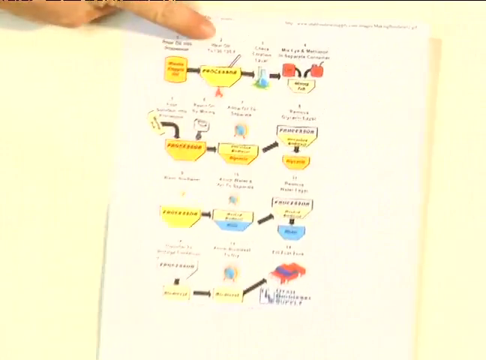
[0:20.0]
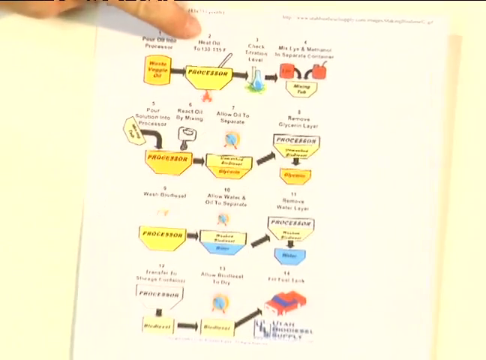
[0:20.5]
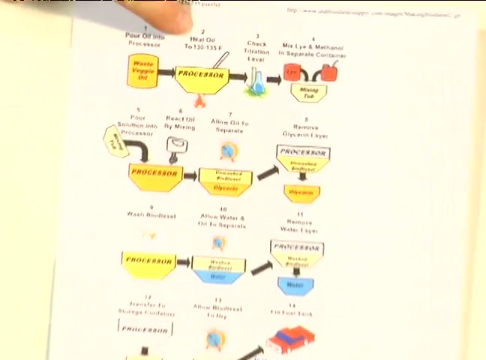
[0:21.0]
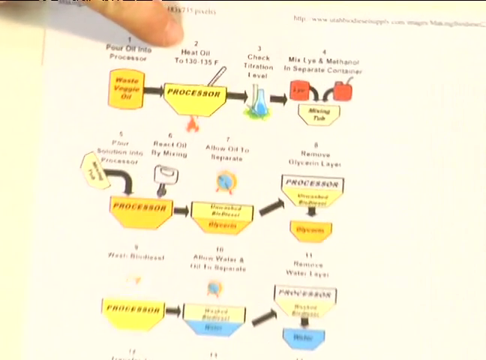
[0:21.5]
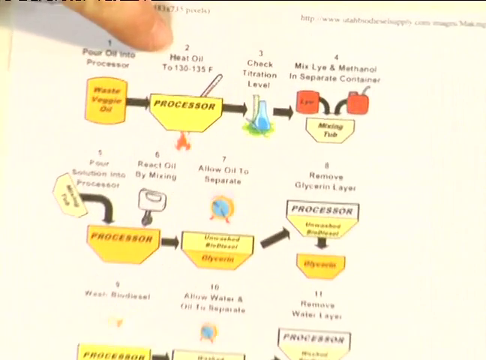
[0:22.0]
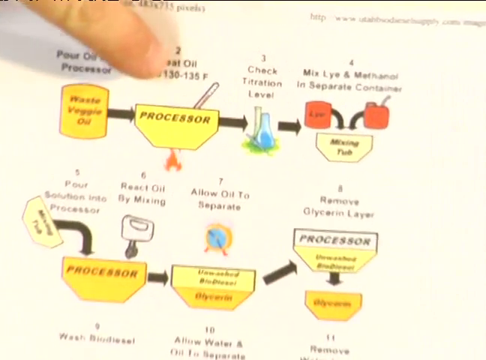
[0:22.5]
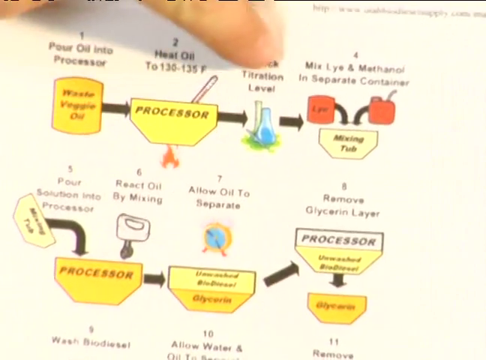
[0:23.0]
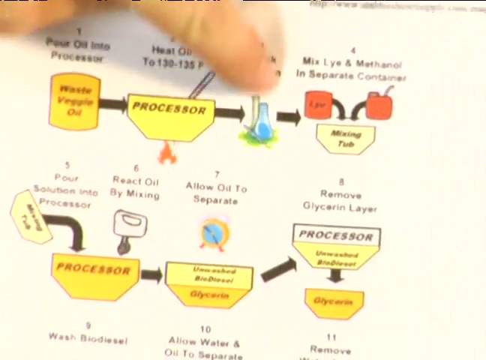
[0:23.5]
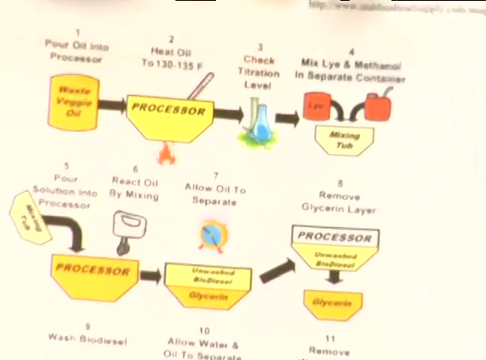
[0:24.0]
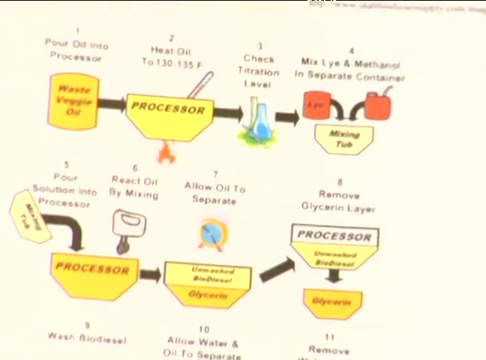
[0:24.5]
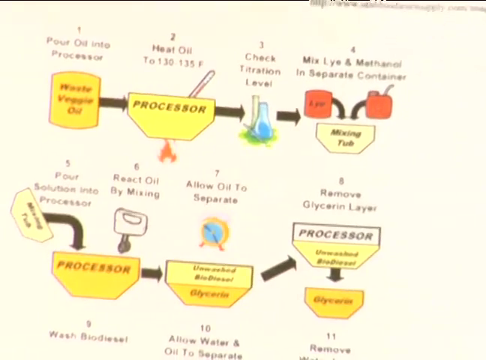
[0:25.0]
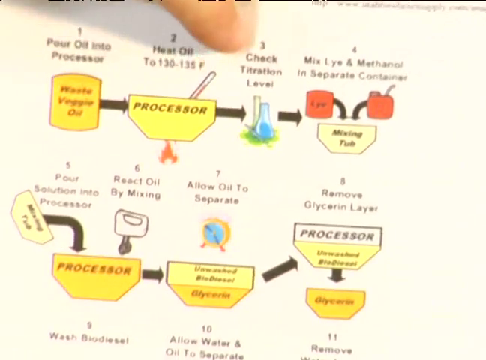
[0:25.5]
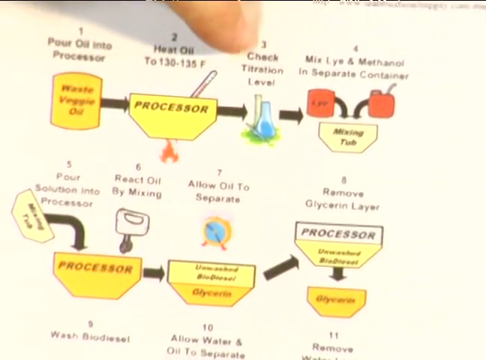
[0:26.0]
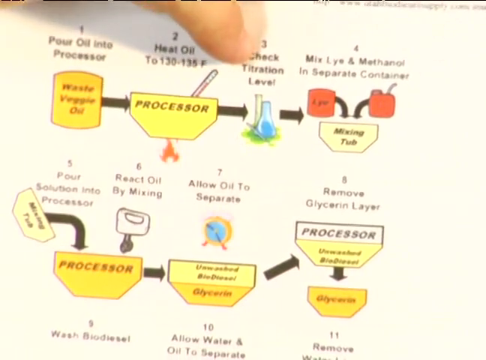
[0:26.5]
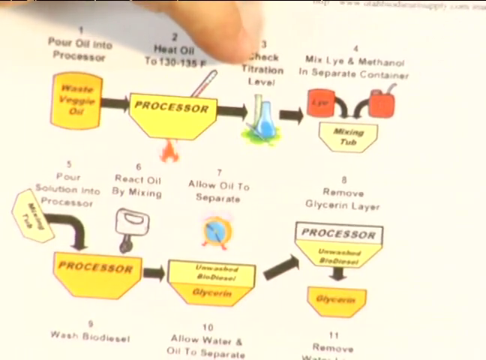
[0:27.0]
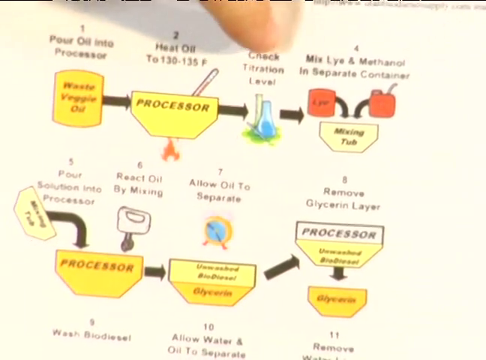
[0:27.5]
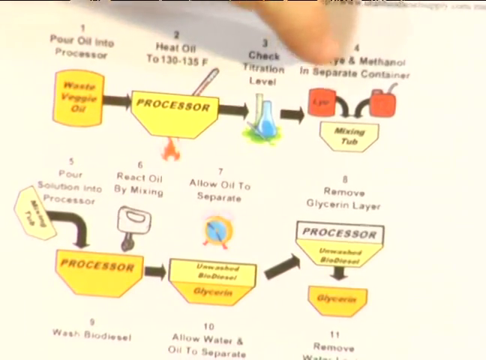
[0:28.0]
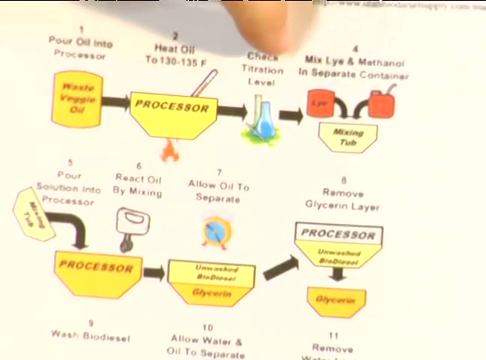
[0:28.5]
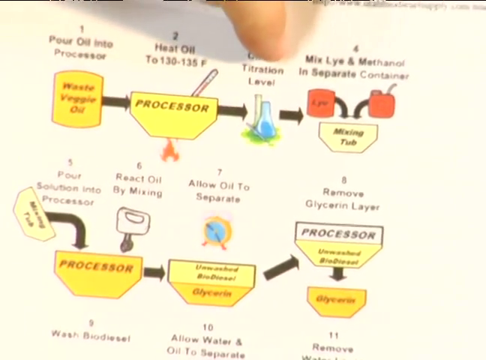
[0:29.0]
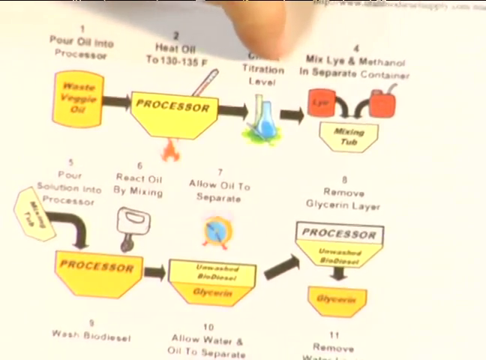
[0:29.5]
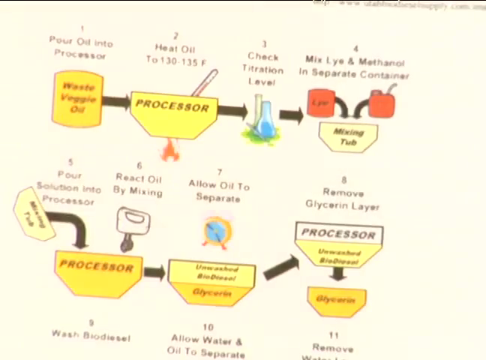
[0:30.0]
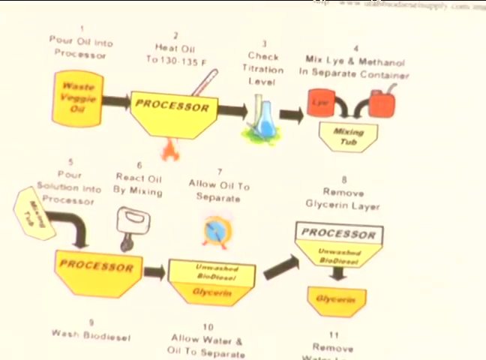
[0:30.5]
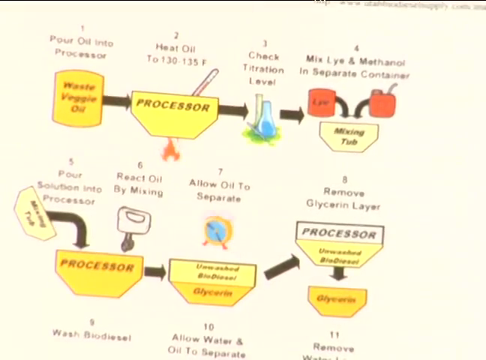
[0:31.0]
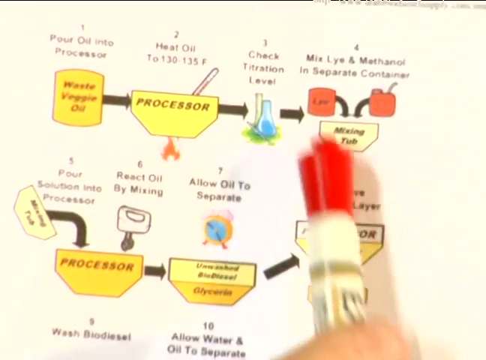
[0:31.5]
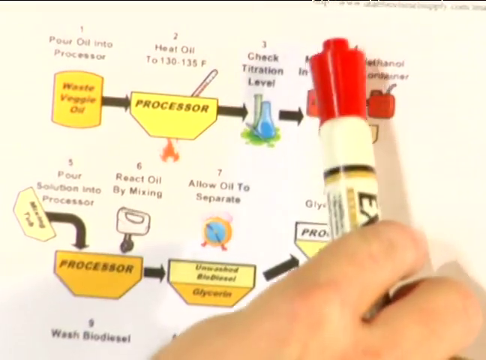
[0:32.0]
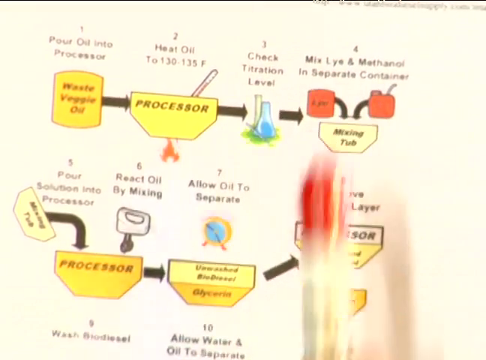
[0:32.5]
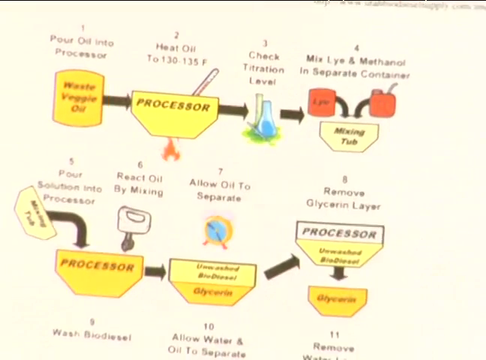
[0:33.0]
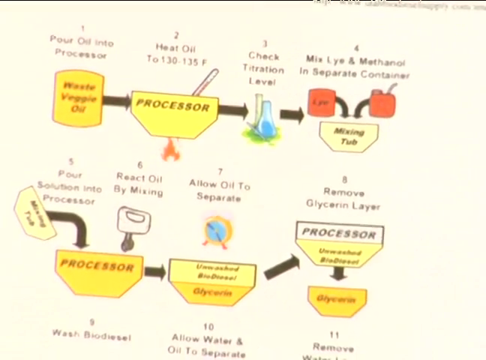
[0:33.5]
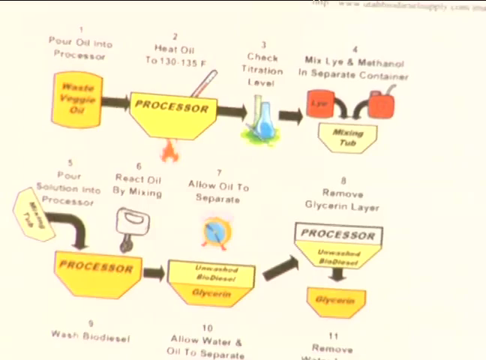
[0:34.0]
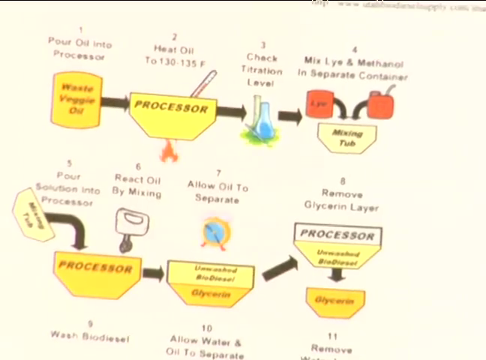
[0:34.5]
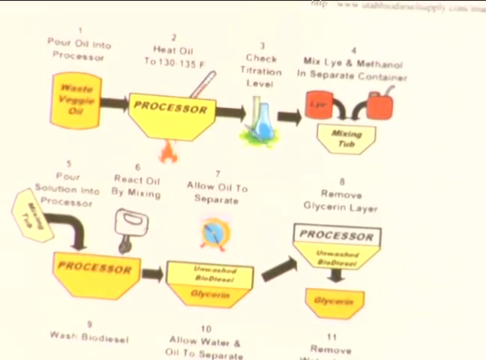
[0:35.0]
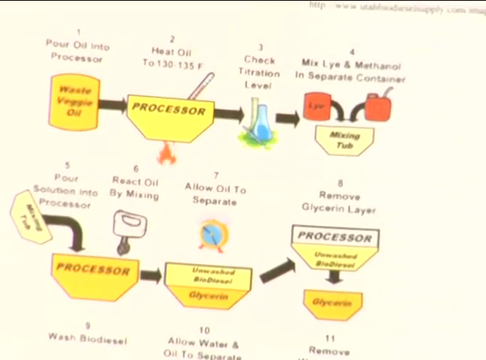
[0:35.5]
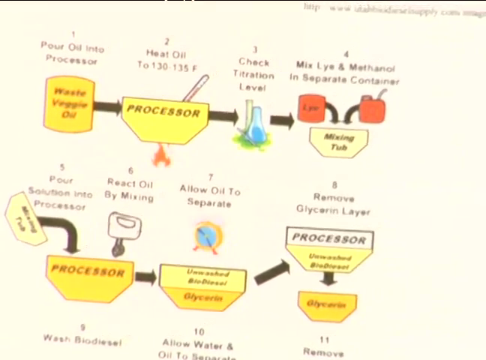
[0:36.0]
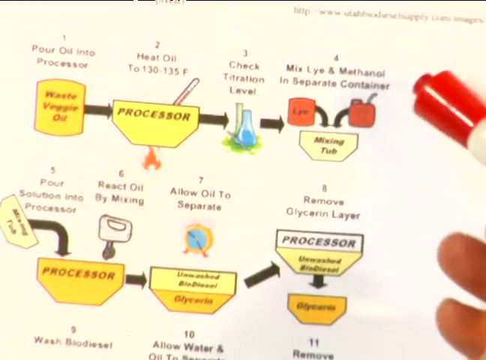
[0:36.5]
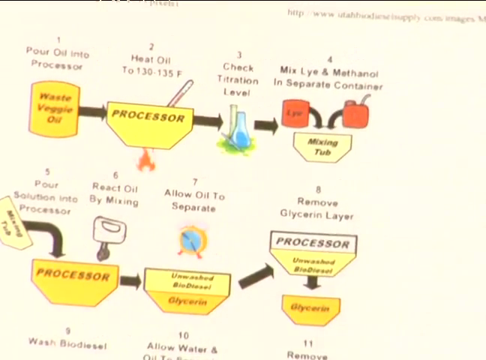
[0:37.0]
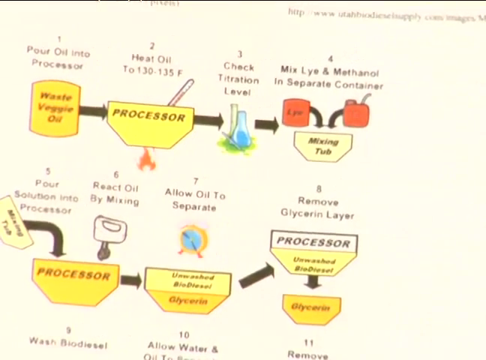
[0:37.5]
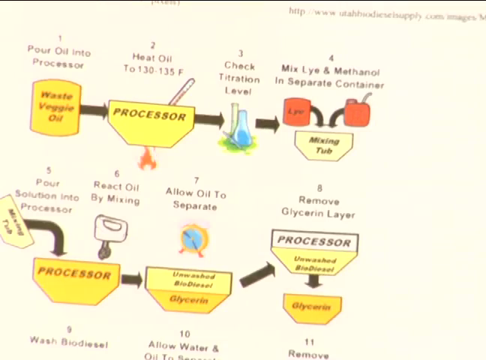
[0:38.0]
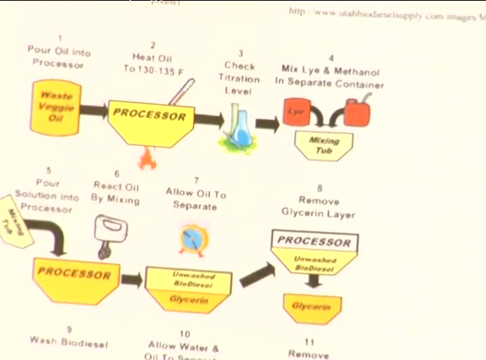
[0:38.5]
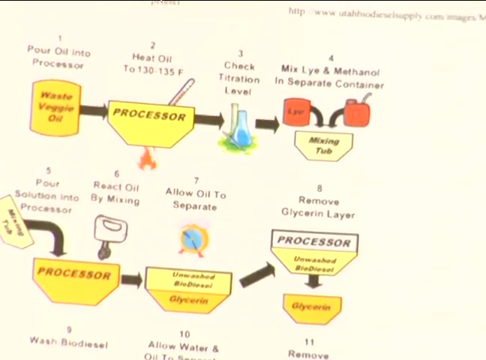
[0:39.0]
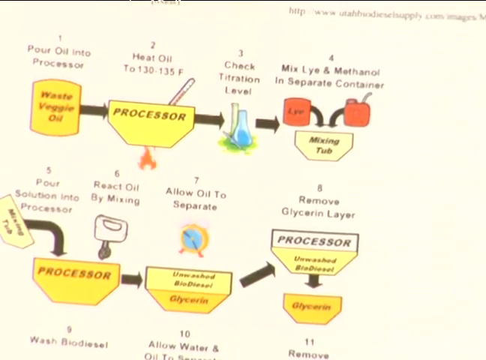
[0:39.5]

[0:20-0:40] The experimenter or presenter looks at the piece of paper, which has some different reactions on it and looks like instructions for the experiment. It is illustrated in kind of a diagram, with compounds listed on the sheet. The numbered instructions read: one, "pour oil into processor"; two, "heat oil"; three, "check filtration level"; four, "mix lye and methanol in separate containers"; five, "pour solution into processor"; six, "react oil by mixing"; seven, "allow oil to separate"; eight, "remove glycerin layer". Arrows show the sequence of the steps.